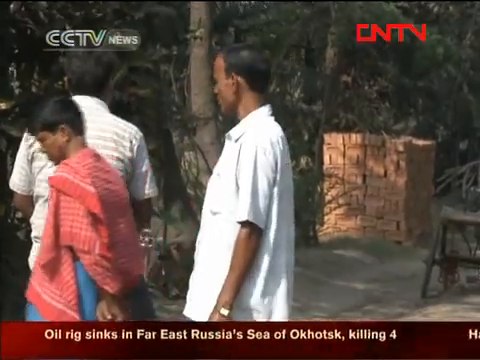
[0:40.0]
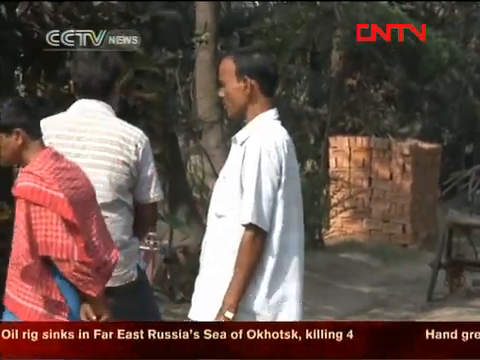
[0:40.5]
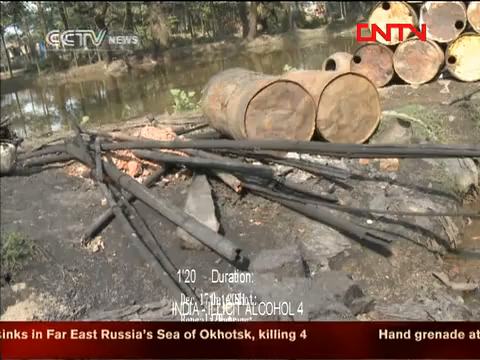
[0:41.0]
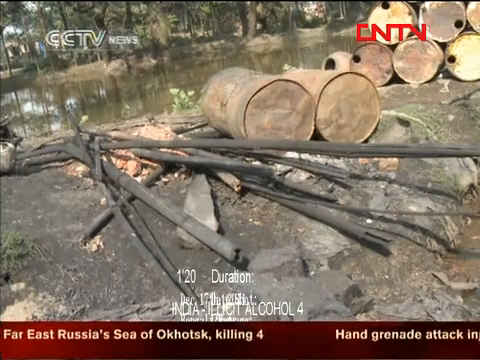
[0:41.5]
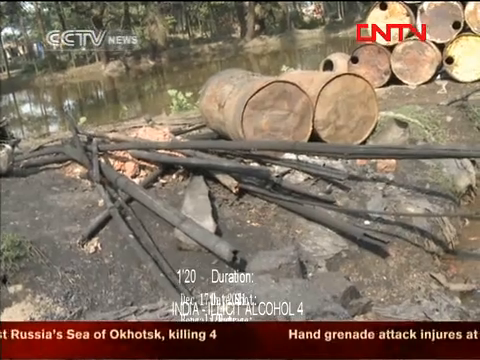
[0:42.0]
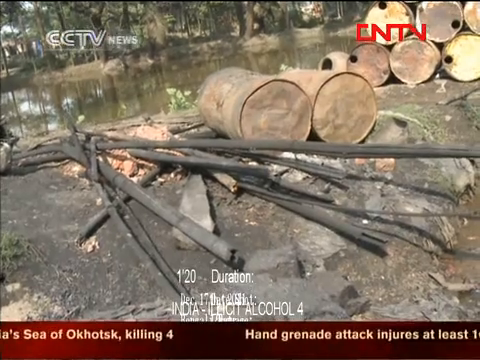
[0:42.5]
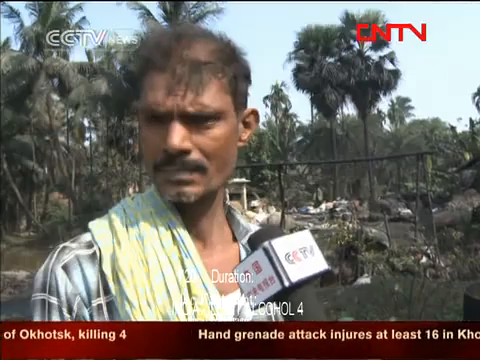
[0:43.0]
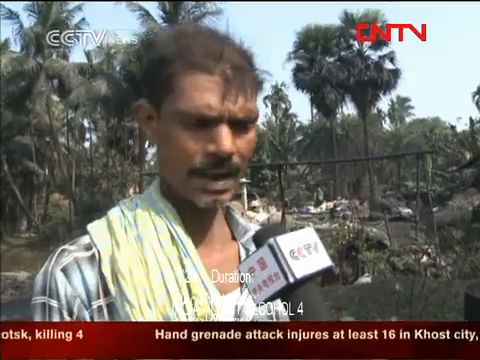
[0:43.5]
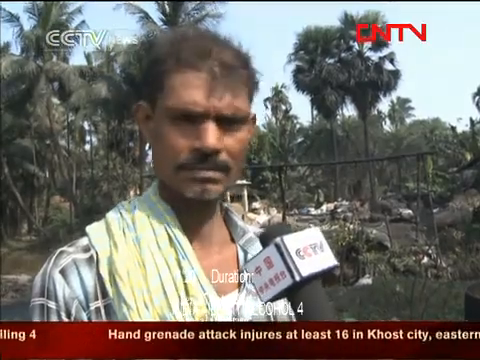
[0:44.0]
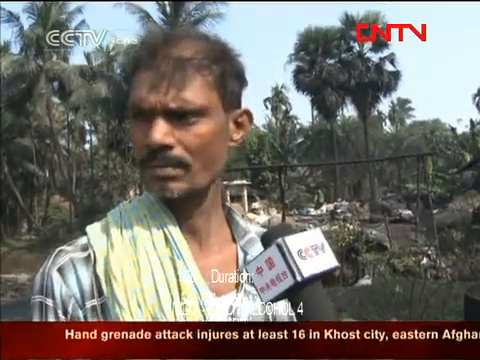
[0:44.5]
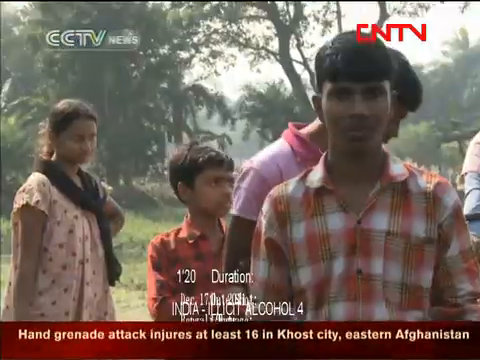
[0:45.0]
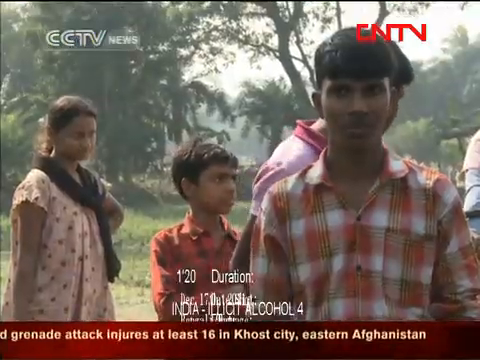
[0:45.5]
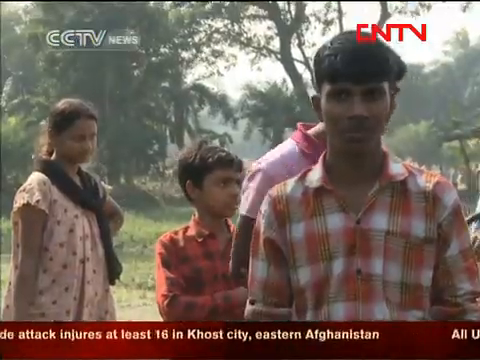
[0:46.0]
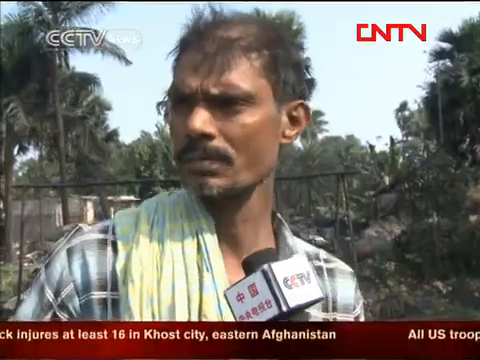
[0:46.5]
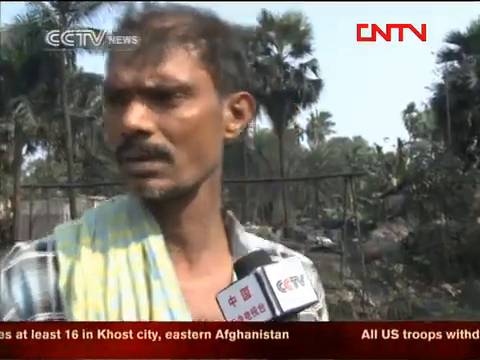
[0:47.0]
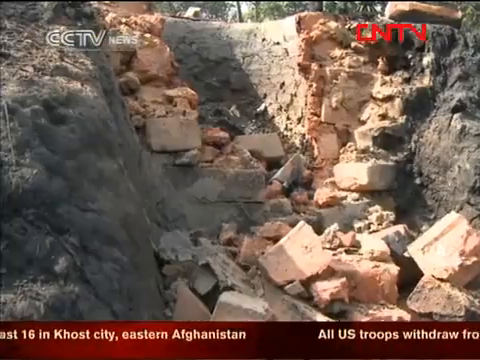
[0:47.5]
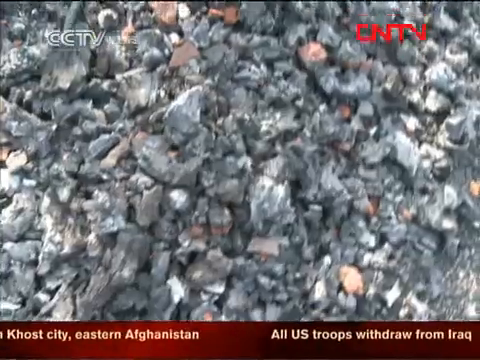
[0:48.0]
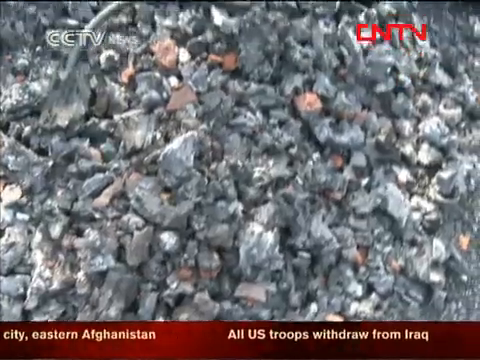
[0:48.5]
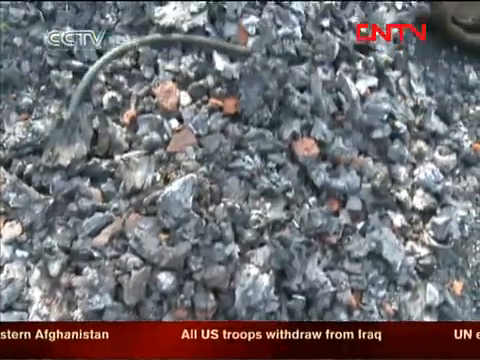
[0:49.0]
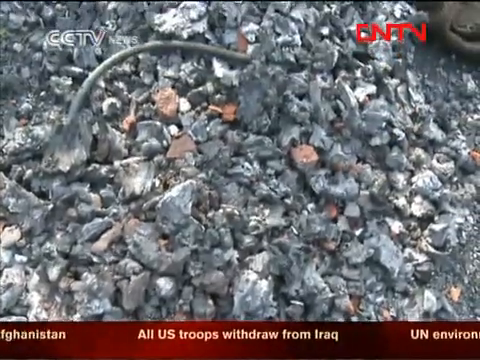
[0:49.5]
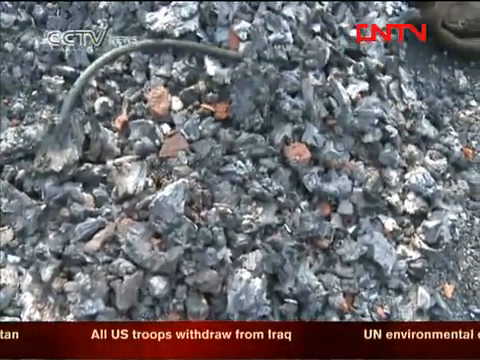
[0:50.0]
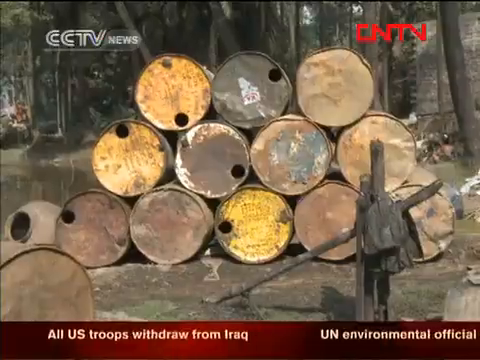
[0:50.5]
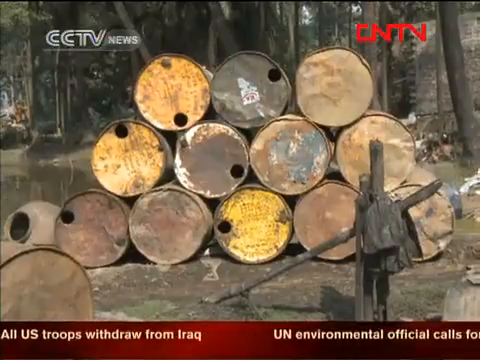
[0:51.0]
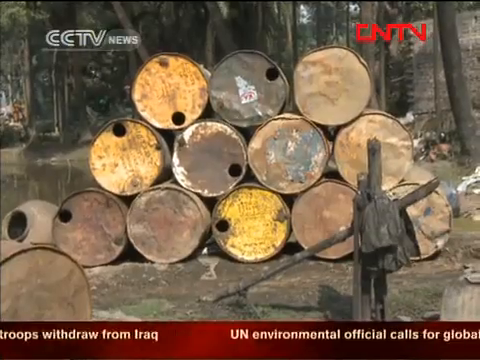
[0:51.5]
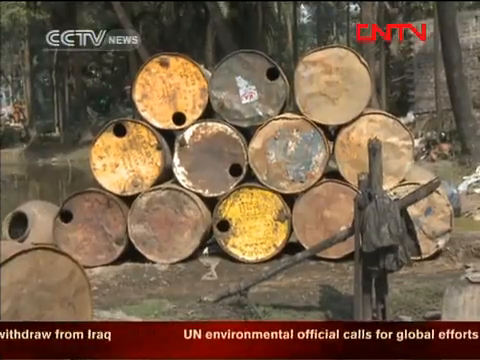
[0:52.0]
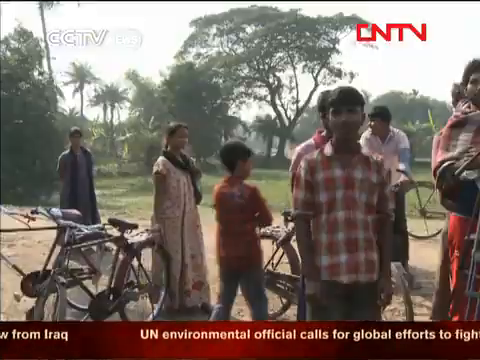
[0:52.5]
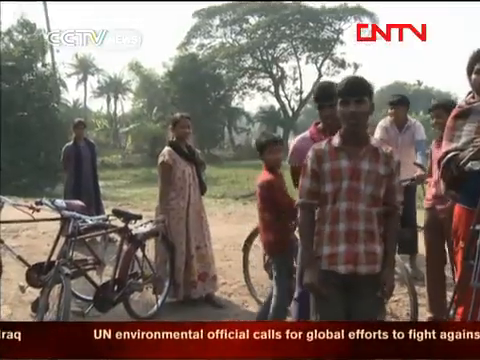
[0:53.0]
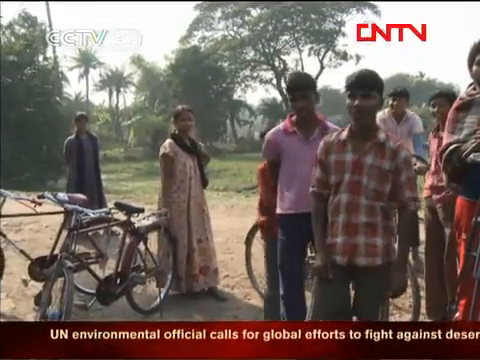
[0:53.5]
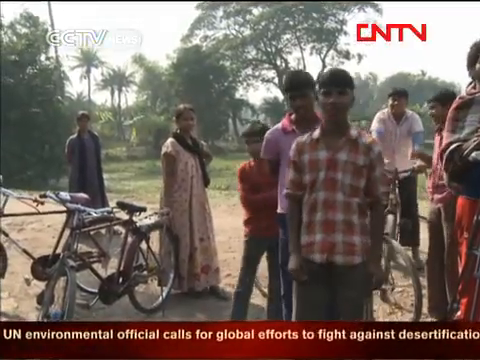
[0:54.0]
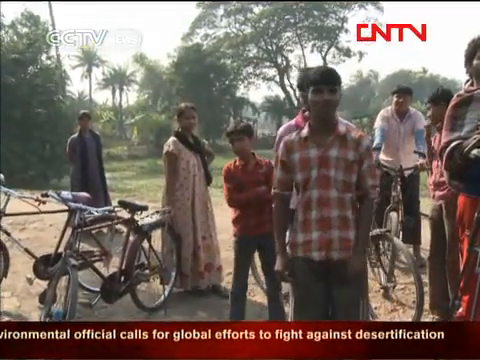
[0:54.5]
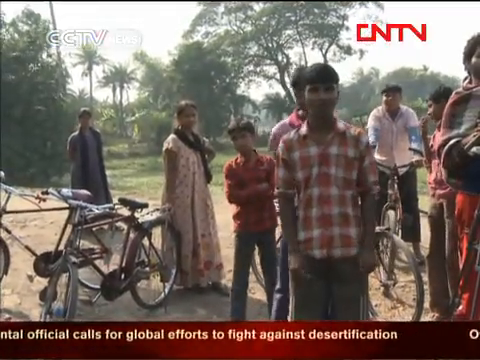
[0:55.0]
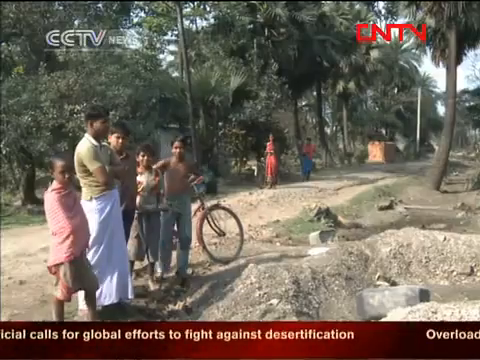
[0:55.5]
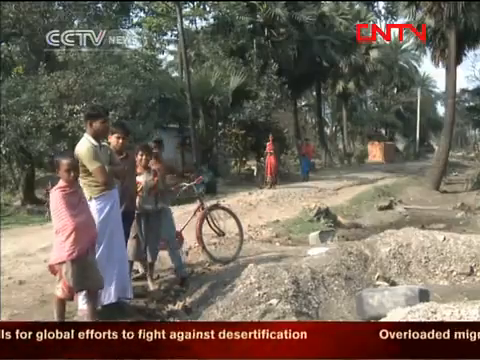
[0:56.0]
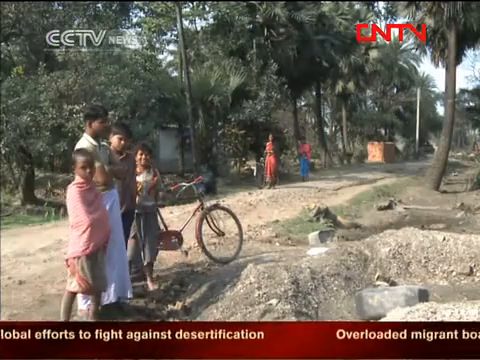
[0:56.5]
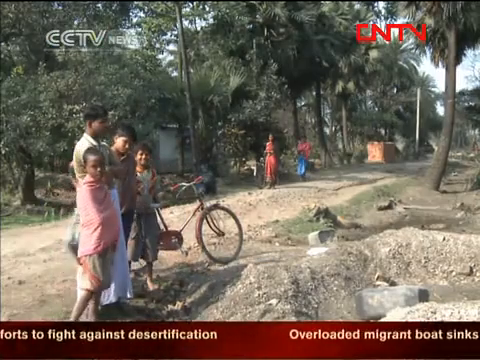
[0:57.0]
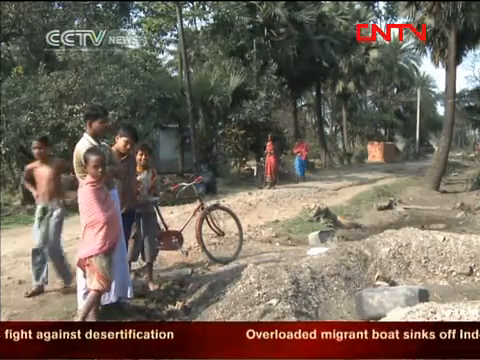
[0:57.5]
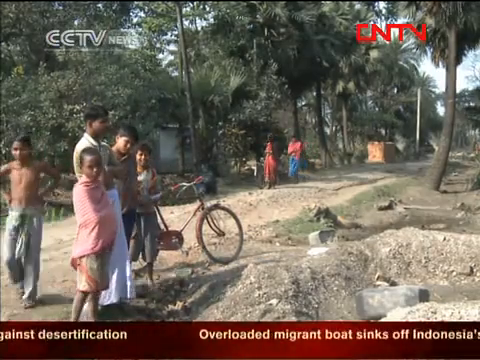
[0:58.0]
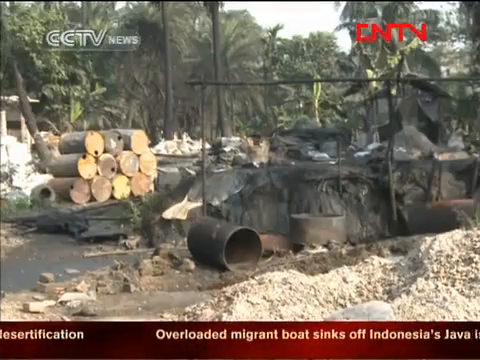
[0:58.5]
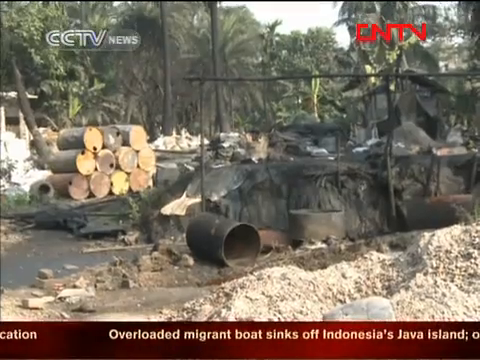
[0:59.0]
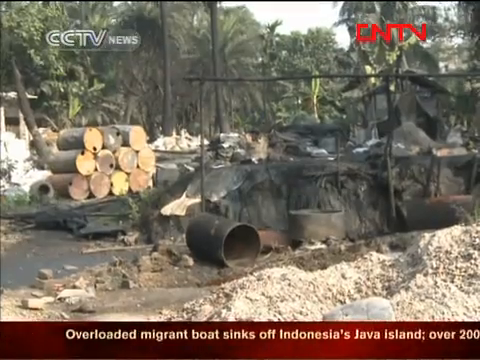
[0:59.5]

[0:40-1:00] The outdoor facility has rusted metal pipes, some broken in two and some with jagged edges, and many rusty barrels lying on their side, some piled one on top of another. They are near a shallow body of water that looks like a pond. Locals are interviewed: a man of South Asian descent with a towel over his neck speaks for about two seconds before the video cuts to a crowd of people in the background, mostly males except for one woman at the back on the left wearing a black scarf around her neck. It cuts back to the man speaking in front of a microphone. Next comes the makeshift wall that was attempted but crumbled, with debris everywhere, then small metal parts on the property mixed with rocks, and barrels stacked one on top of another. Another shot of the crowd shows some people with bicycles and some children.